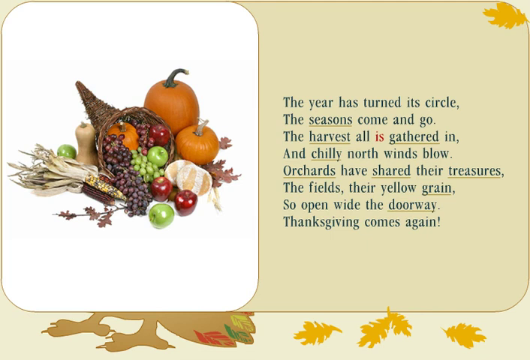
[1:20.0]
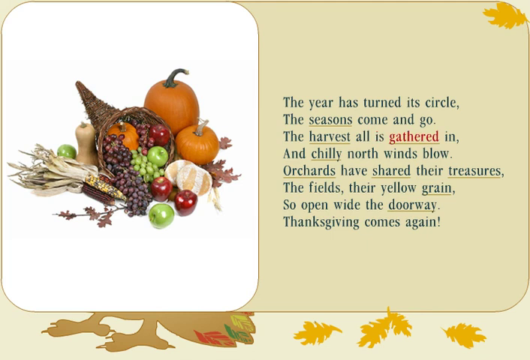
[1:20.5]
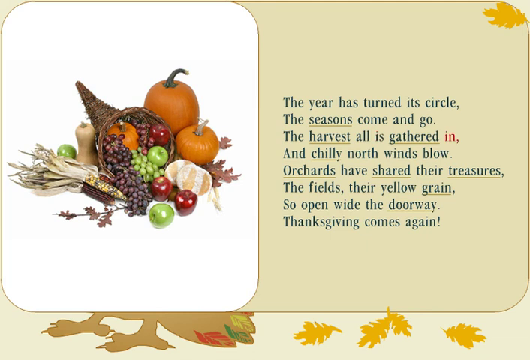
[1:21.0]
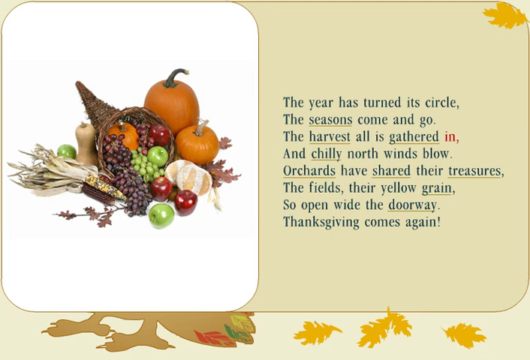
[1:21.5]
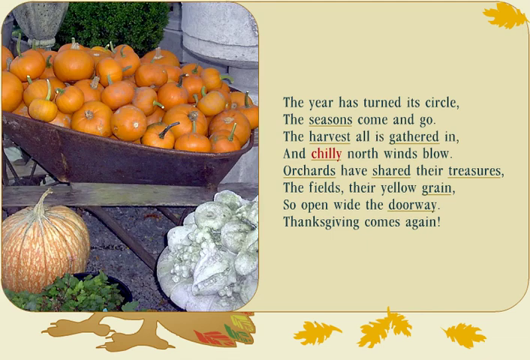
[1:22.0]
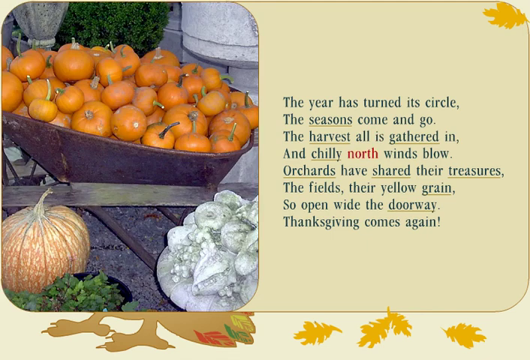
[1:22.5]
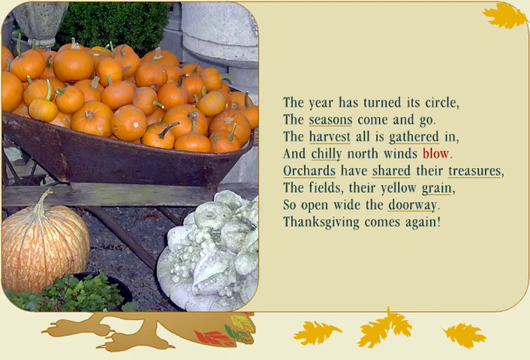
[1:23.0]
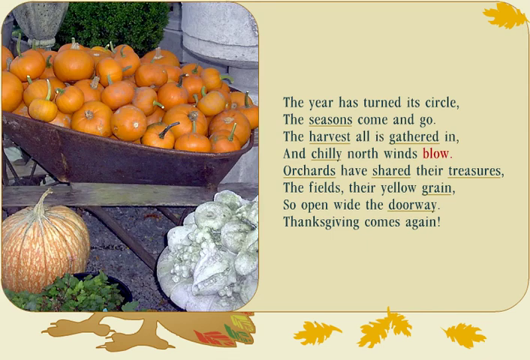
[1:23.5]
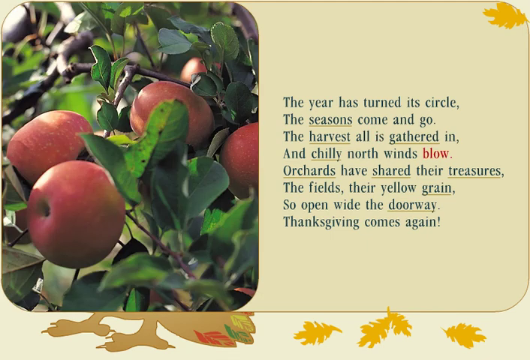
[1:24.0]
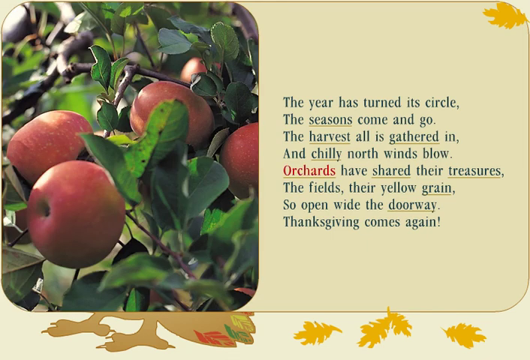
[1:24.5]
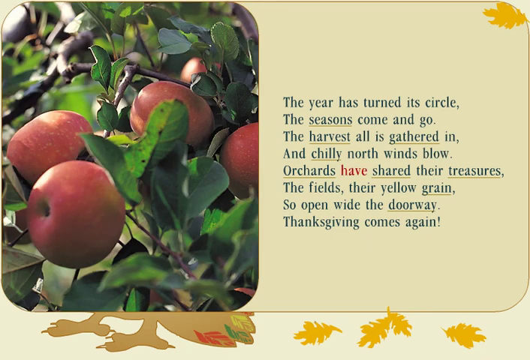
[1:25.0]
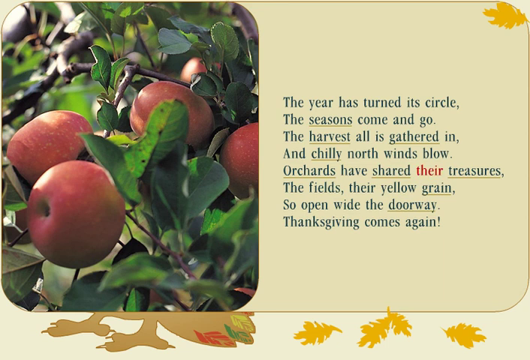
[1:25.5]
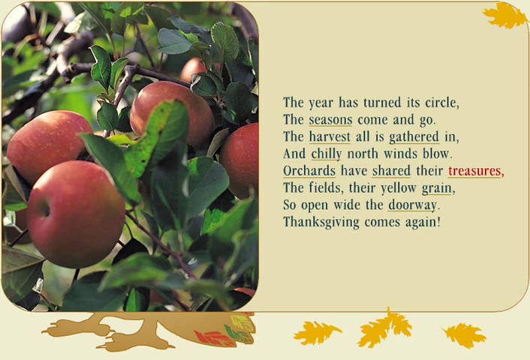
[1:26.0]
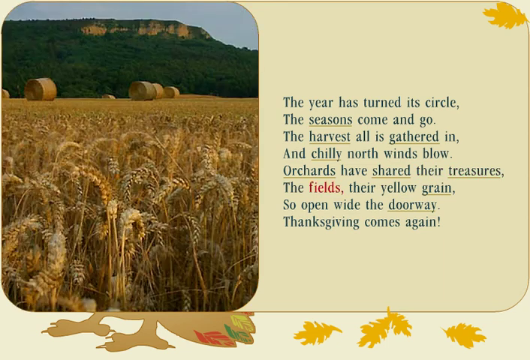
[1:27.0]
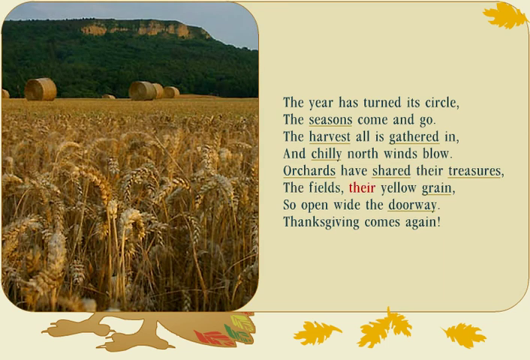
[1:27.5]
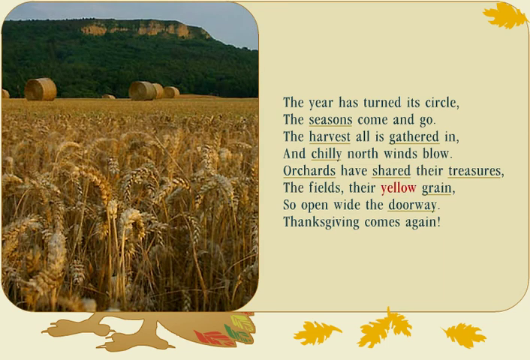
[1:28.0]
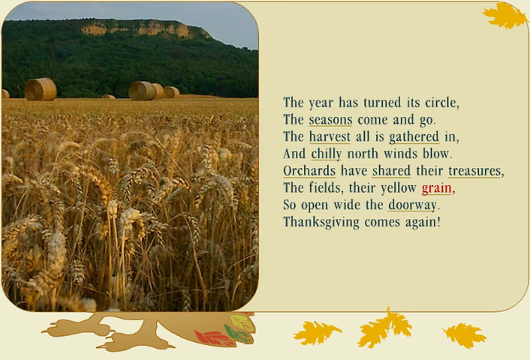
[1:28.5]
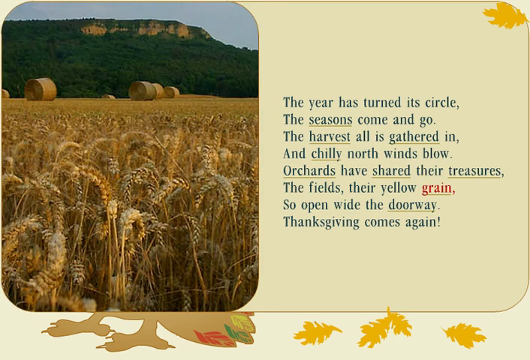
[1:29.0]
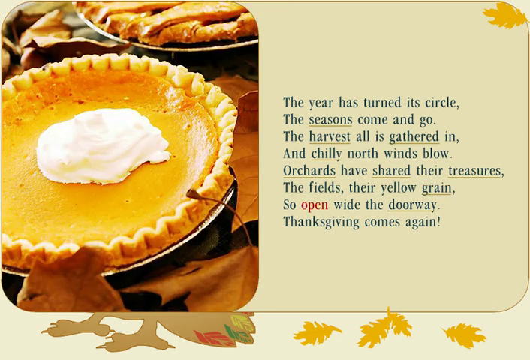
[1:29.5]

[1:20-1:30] The same poem remains on the right, while the left side shows a different picture: a cornucopia with a couple of pumpkins, apples, and some Indian corn. It cuts to a picture of a wheelbarrow with a bunch of tiny pumpkins in it, a big pumpkin in front, and some other types of gourds, with the poem still on the right. Next comes a picture of apples hanging on a tree, followed by a picture of a field of grain with large hay rolls in the back.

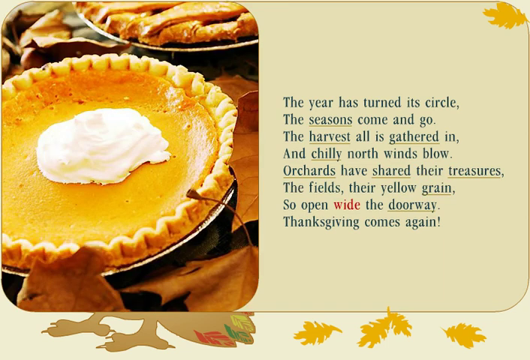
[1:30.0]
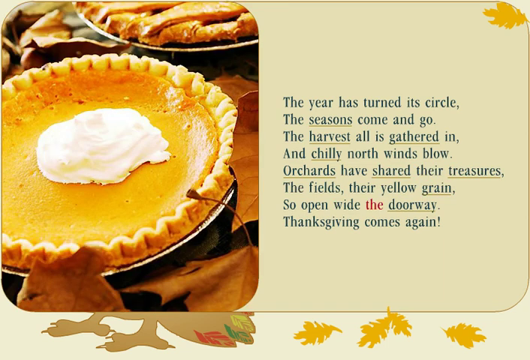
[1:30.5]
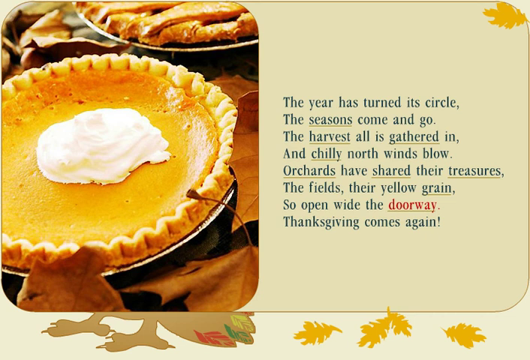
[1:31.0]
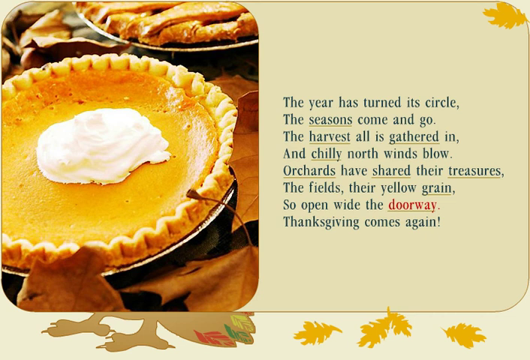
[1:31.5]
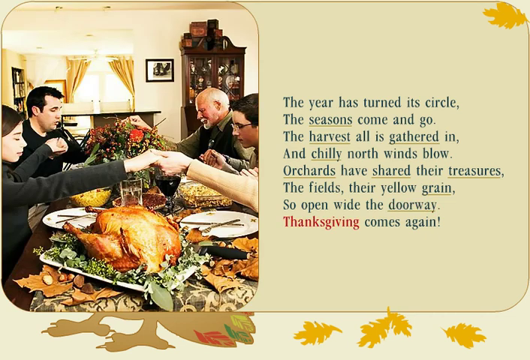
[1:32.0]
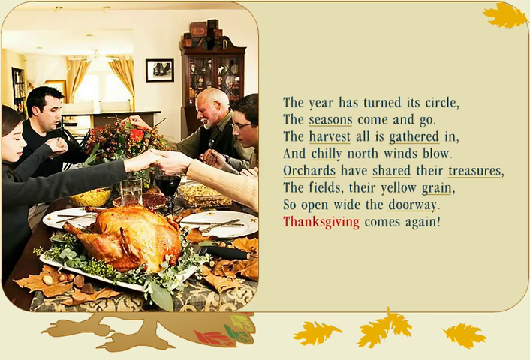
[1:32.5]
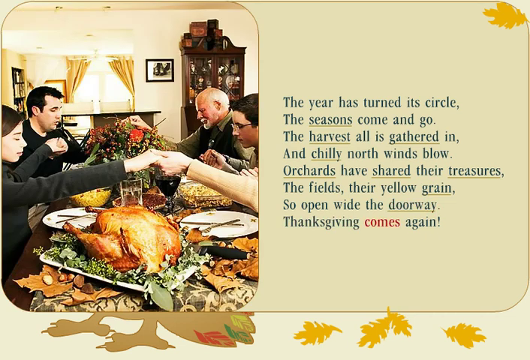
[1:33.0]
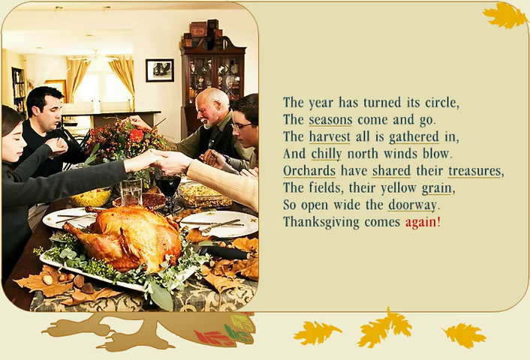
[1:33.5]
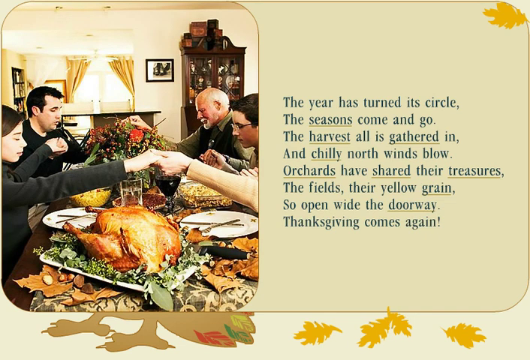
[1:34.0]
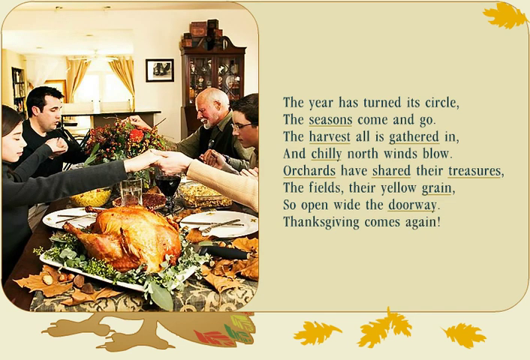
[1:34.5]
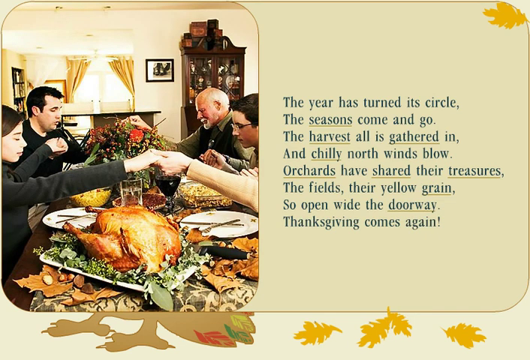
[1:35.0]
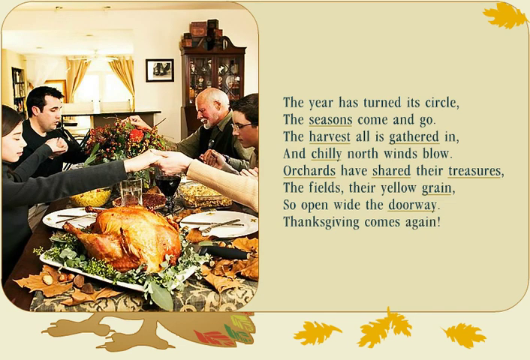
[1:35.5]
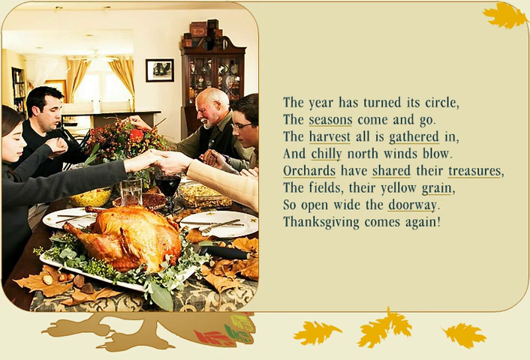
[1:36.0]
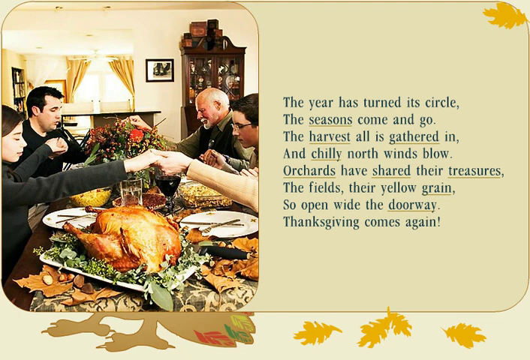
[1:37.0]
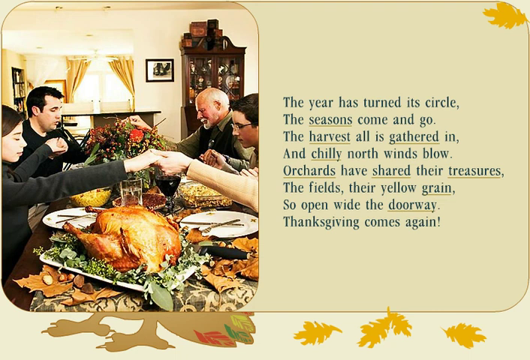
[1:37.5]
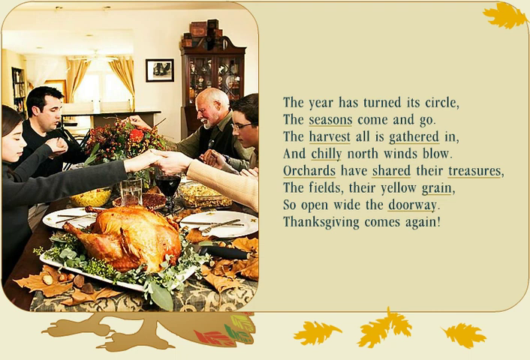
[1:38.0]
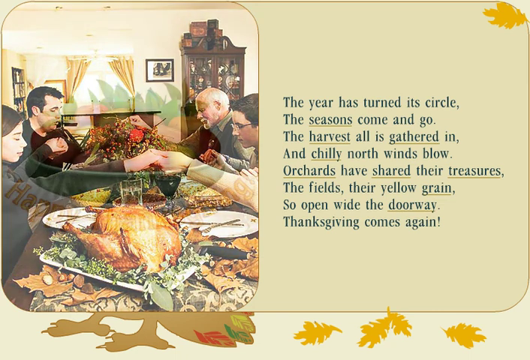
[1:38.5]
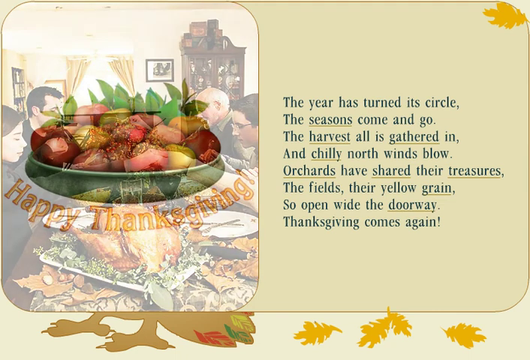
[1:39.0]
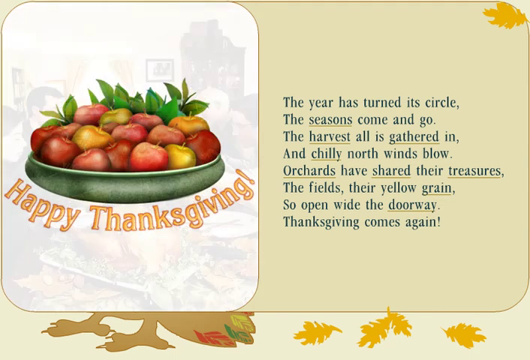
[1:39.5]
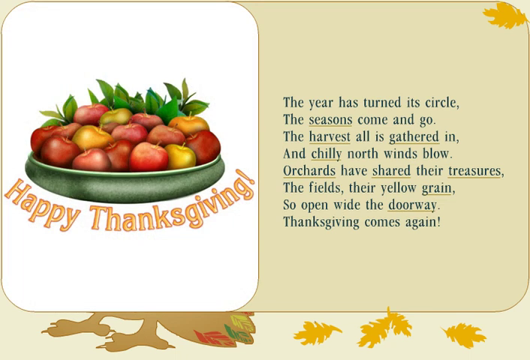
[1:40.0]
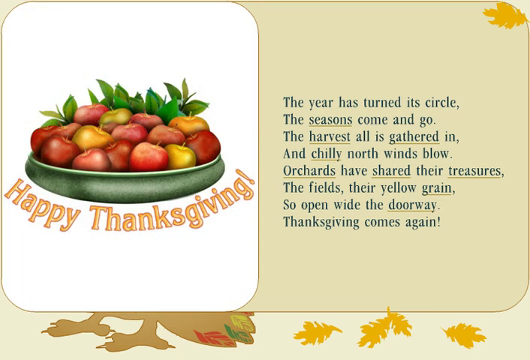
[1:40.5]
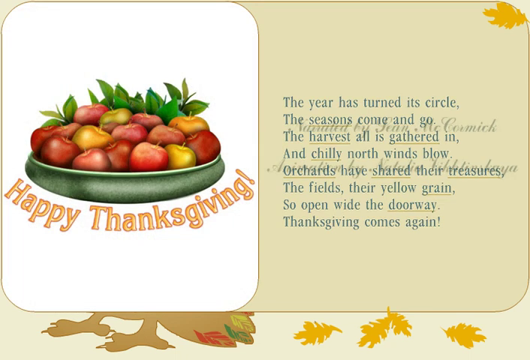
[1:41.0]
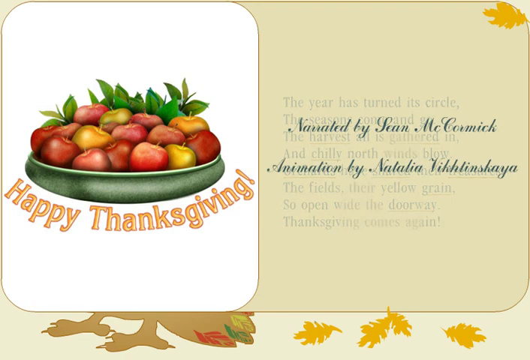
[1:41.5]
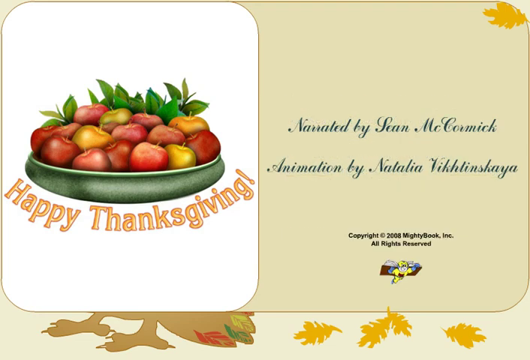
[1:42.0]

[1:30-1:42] A pumpkin pie with a big dollop of cream on top is on the left-hand side, and the same poem, "Thanksgiving," is still on the right. The picture cuts to a family sitting at a Thanksgiving table in their dining room, with a turkey in the foreground; they are all holding hands, saying grace. This fades out to a picture that says "Thanksgiving" with the same plate of apples, with "Happy Thanksgiving" underneath the plate and the same poem on the right.